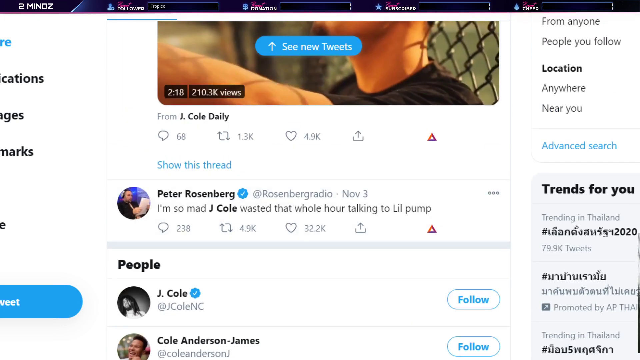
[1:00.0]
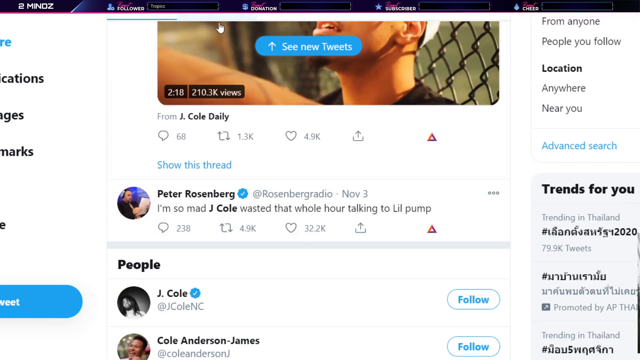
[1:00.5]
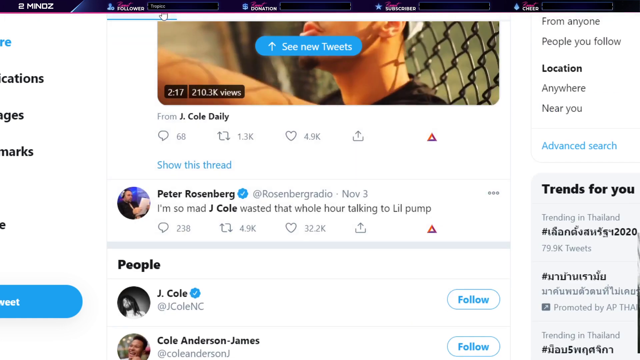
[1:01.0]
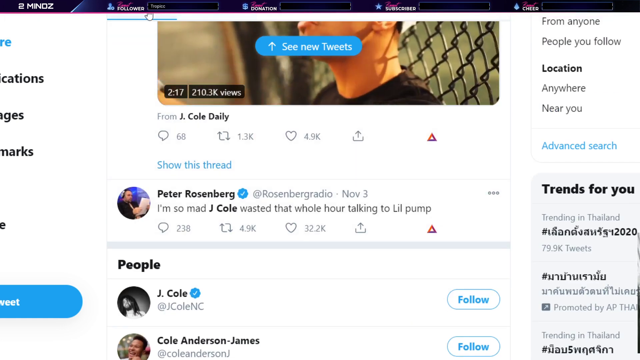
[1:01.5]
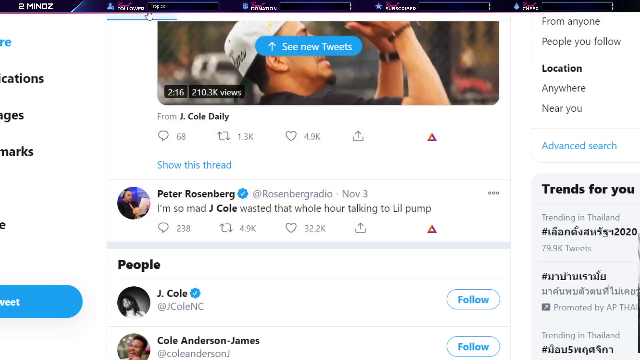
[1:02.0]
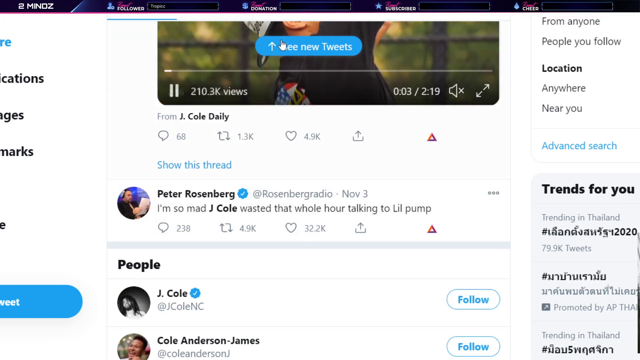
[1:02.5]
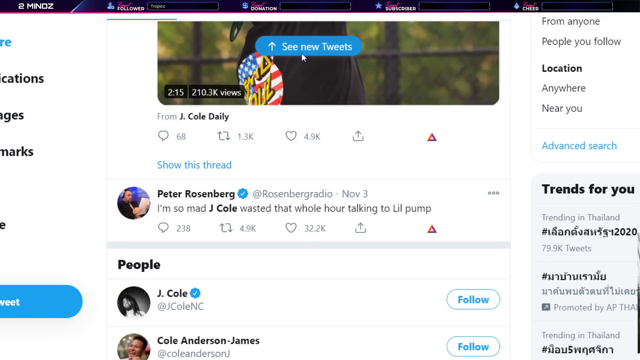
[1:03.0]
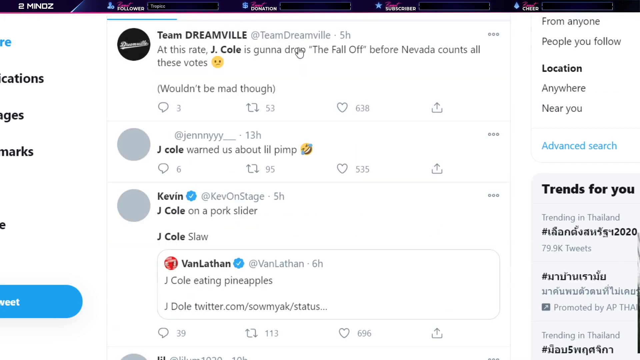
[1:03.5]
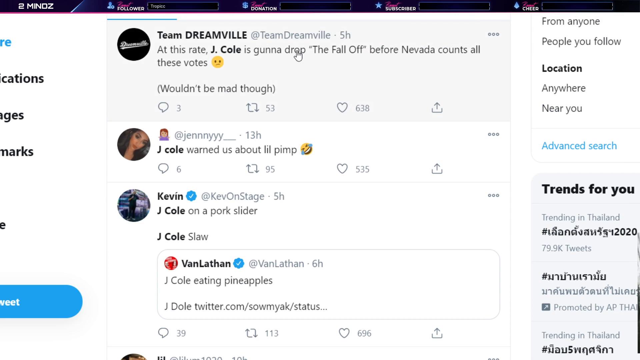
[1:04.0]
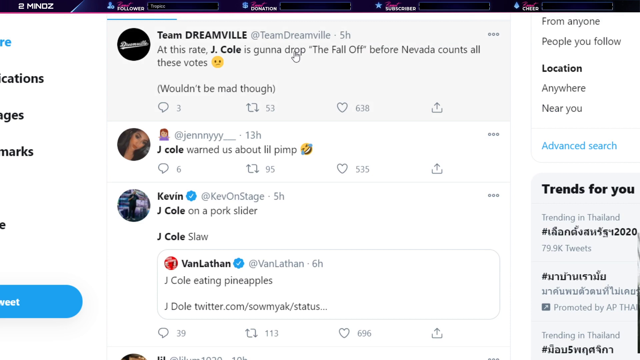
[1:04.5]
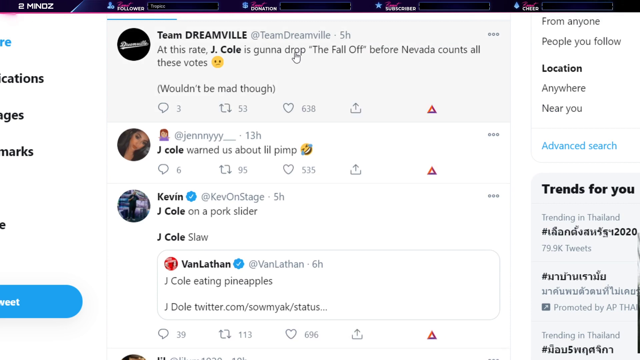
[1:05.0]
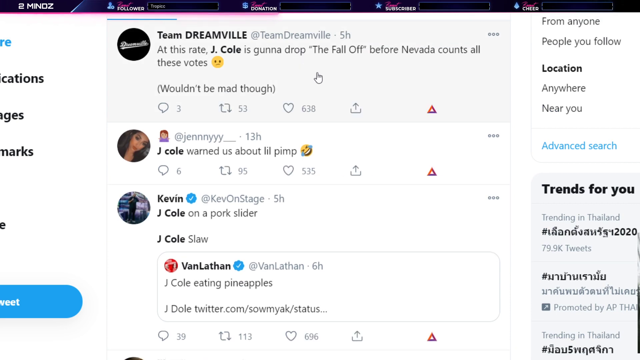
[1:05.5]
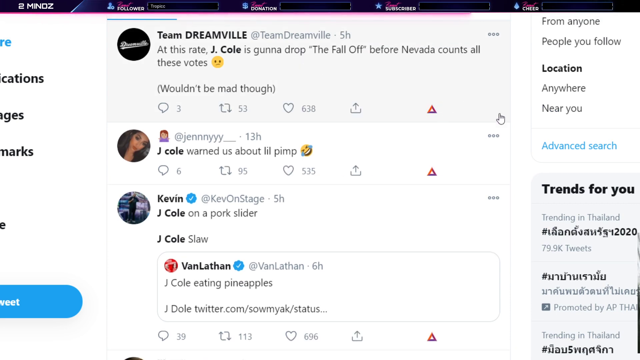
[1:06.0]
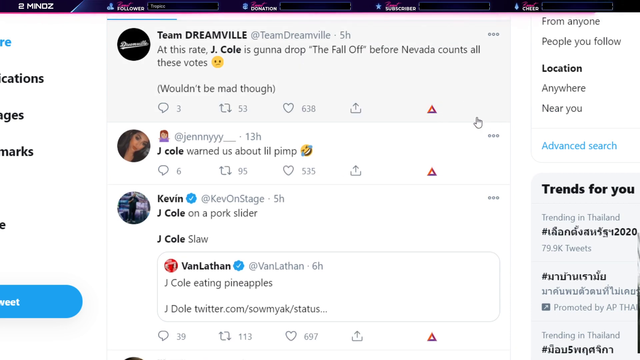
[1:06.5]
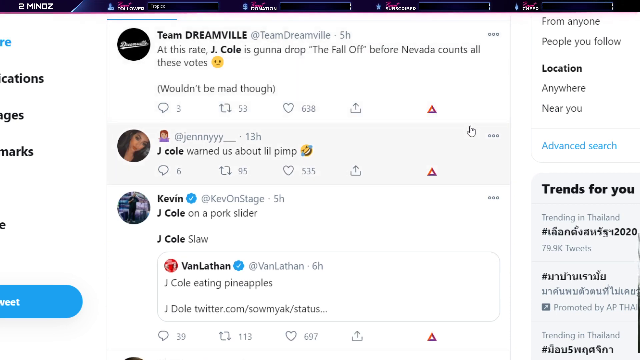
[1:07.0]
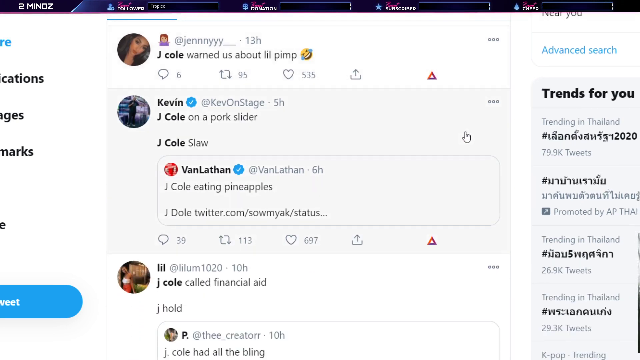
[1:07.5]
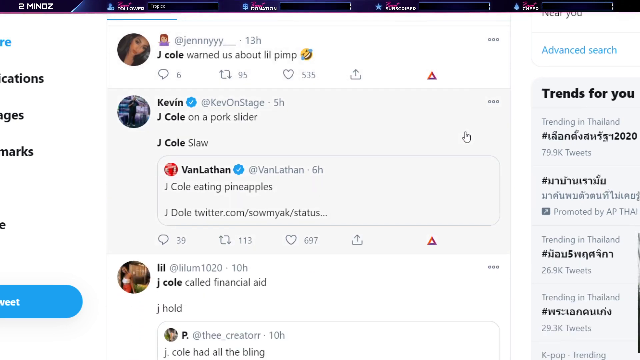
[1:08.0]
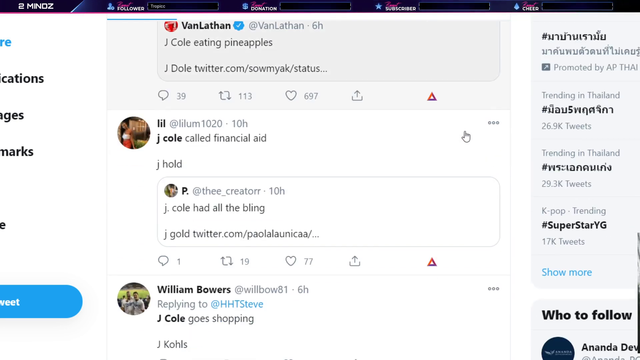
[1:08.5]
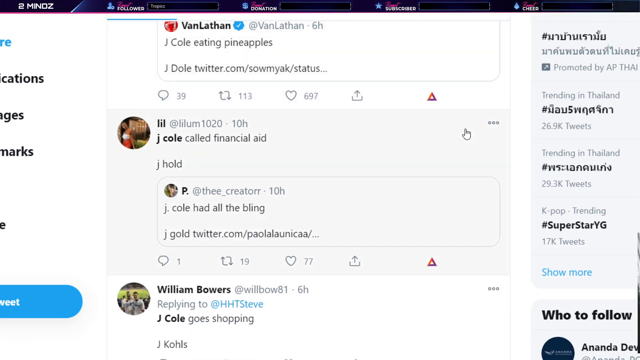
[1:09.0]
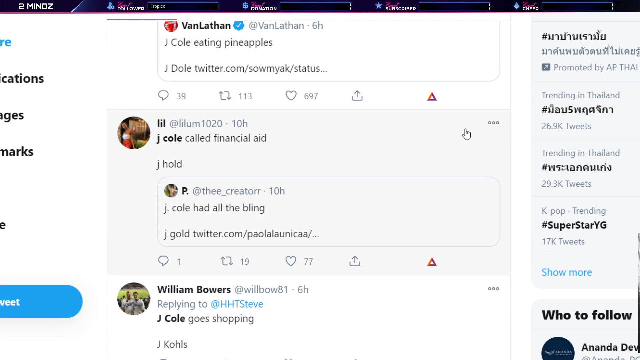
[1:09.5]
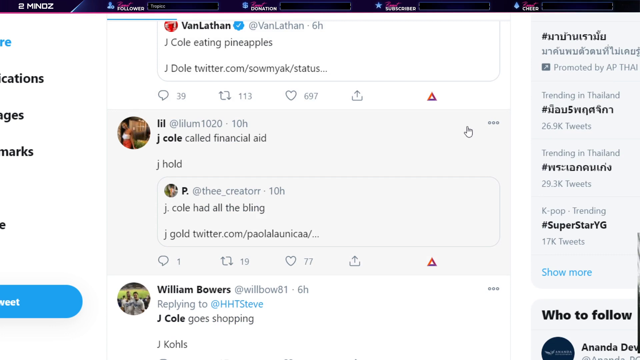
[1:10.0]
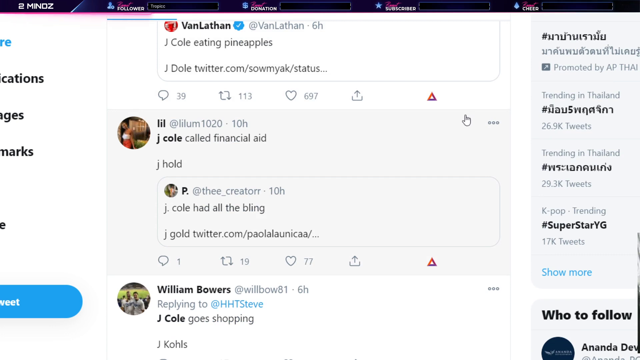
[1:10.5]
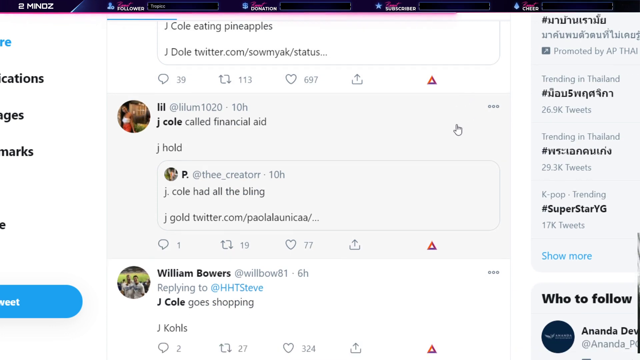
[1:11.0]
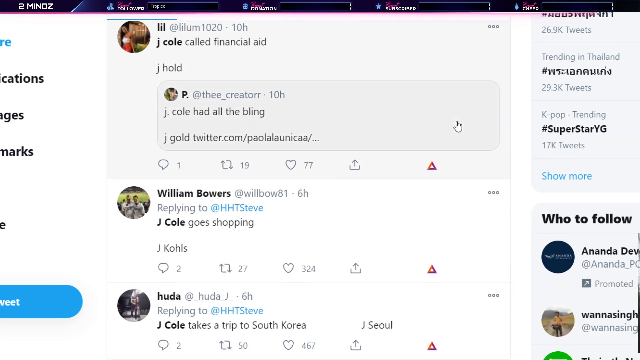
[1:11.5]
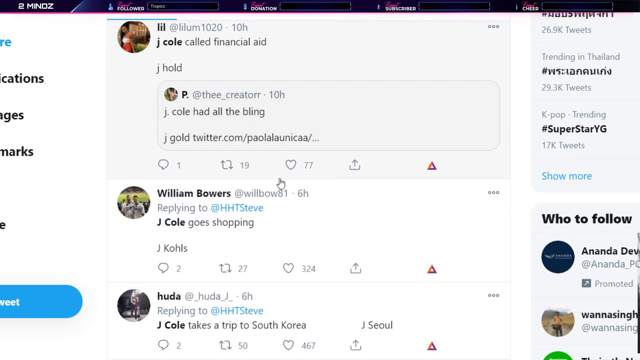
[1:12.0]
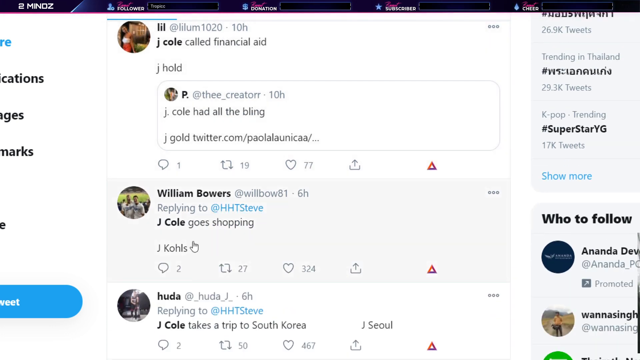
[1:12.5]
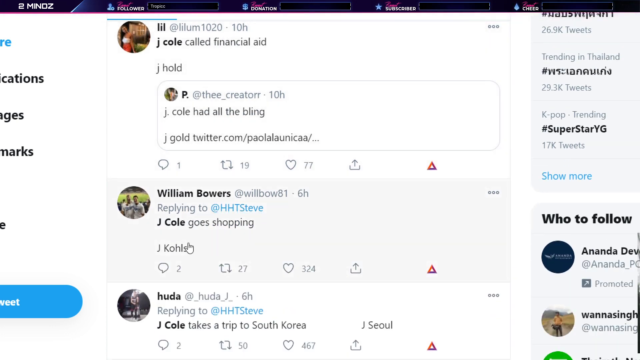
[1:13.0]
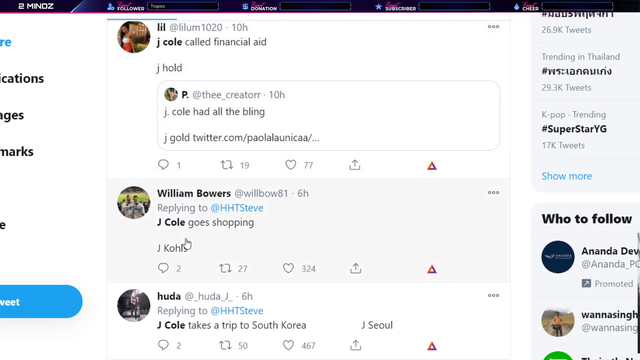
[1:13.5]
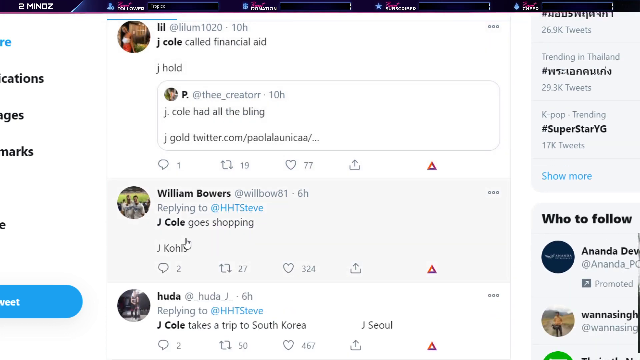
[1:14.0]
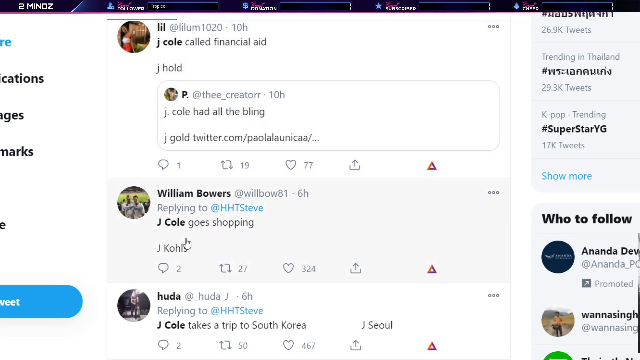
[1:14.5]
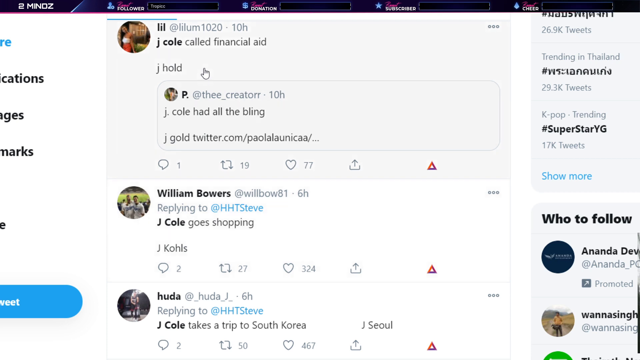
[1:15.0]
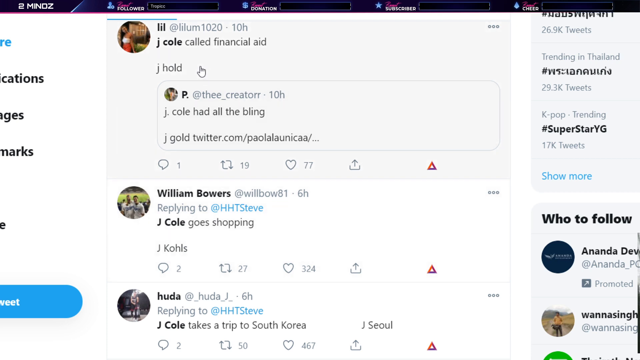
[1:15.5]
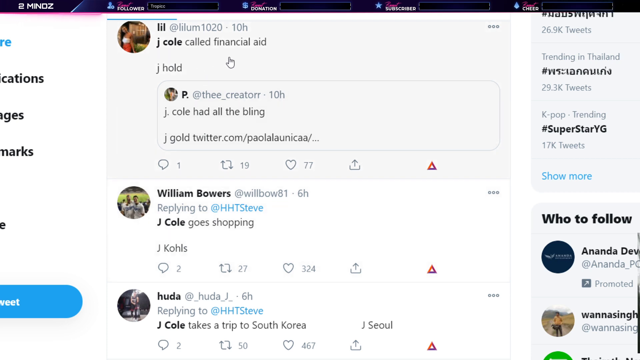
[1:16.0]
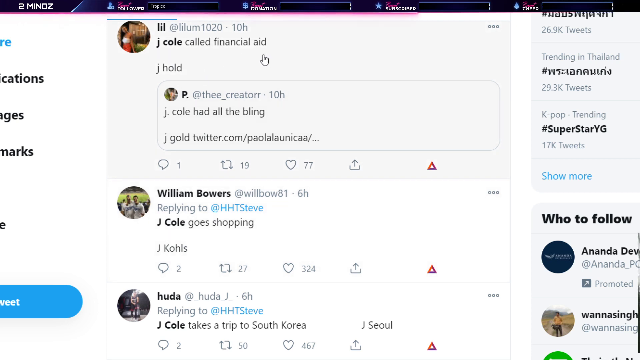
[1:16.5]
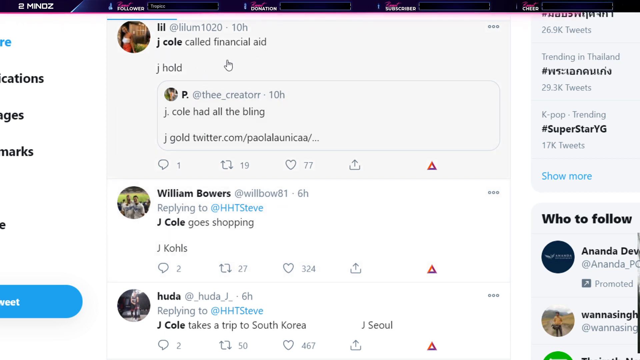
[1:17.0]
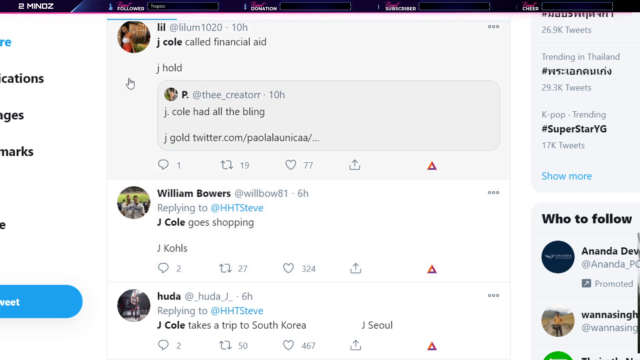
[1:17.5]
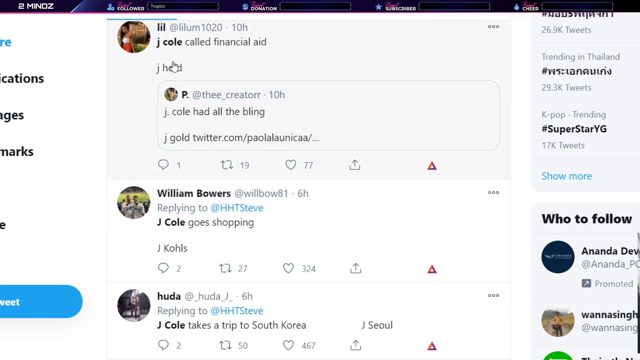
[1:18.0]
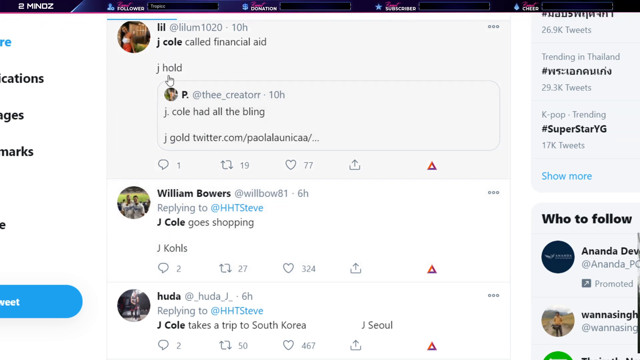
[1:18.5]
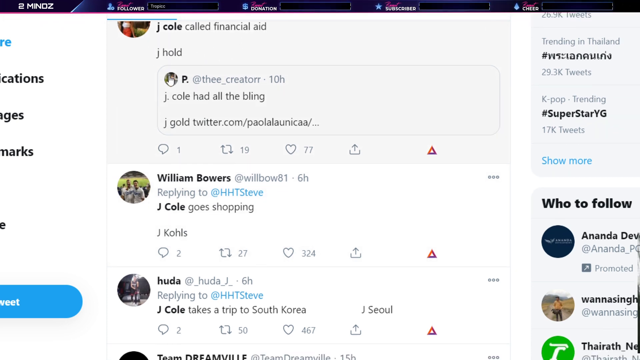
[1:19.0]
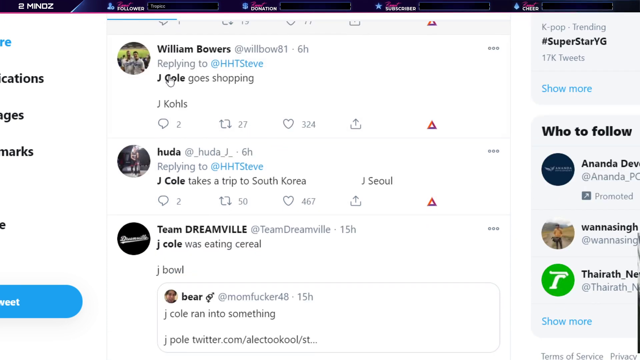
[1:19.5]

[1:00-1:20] A music video of a person singing is shown. Only half of the video is in view, and the rest of the screen is not visible. The video has 210,000 views, a length of 2 minutes and 90 seconds, and its audio is muted. There are many search results about J. Cole, and under people, J. Cole is visible with a follow button on the right. There are several posts about J. Cole, and people seem to admire him a lot. The person scrolls down, looking through the posts about J. Cole.